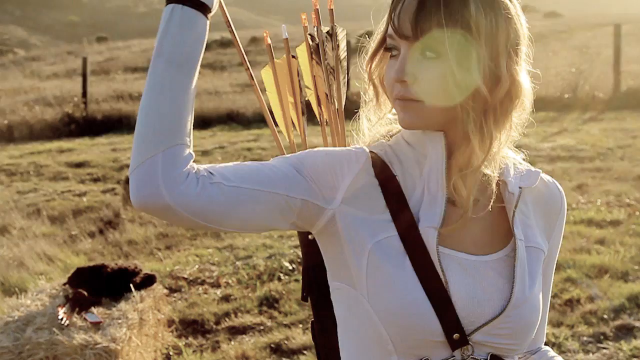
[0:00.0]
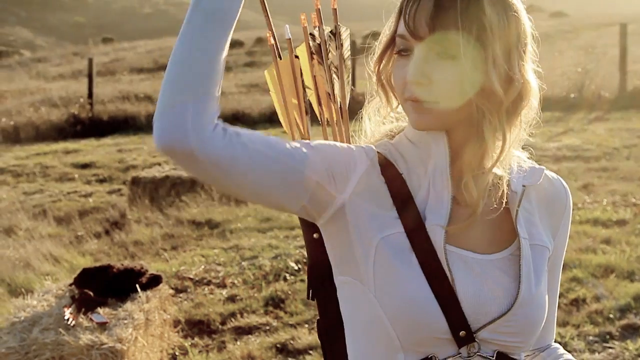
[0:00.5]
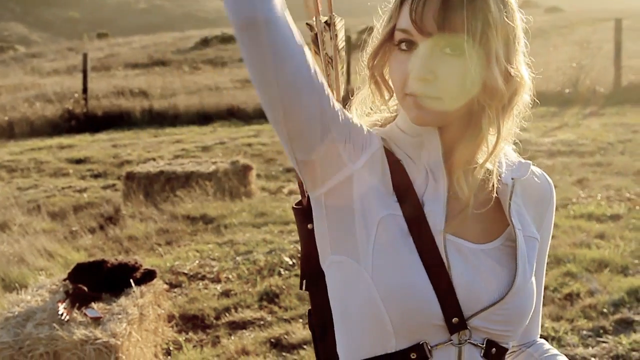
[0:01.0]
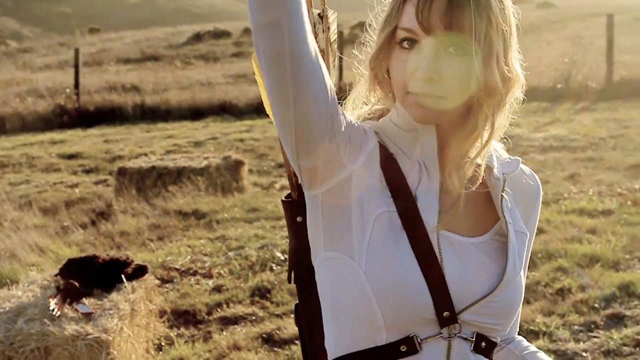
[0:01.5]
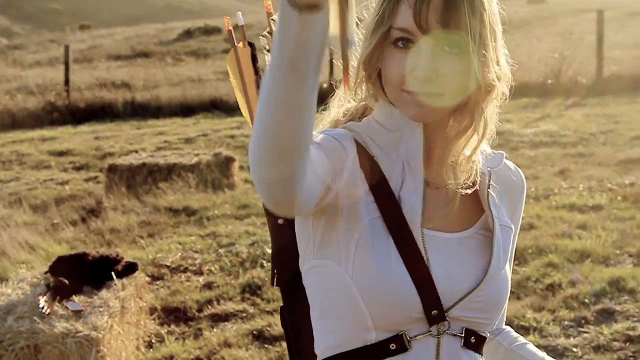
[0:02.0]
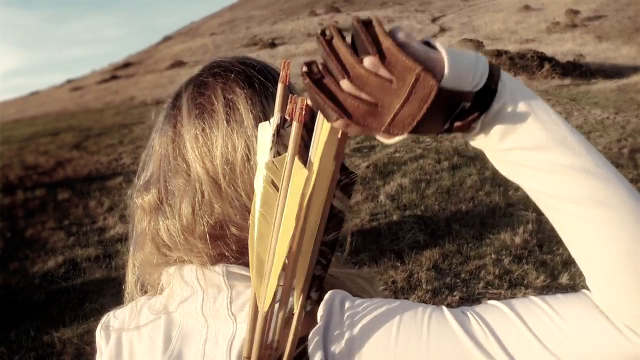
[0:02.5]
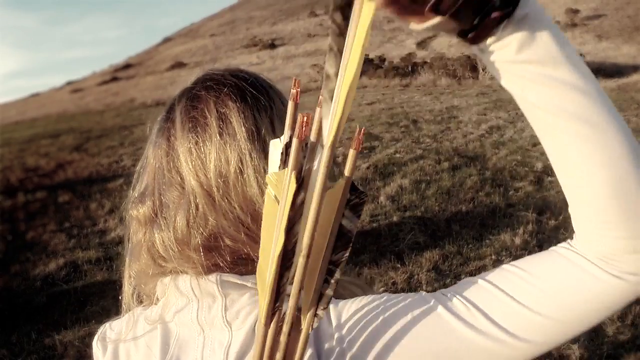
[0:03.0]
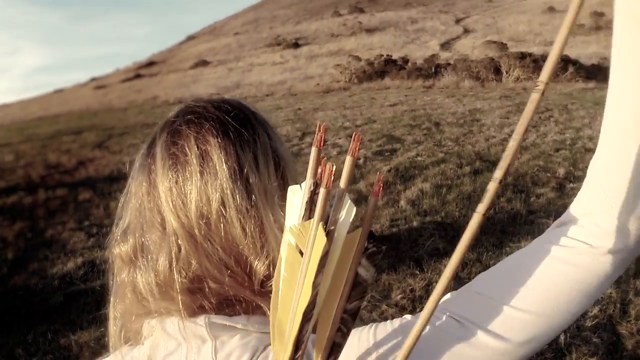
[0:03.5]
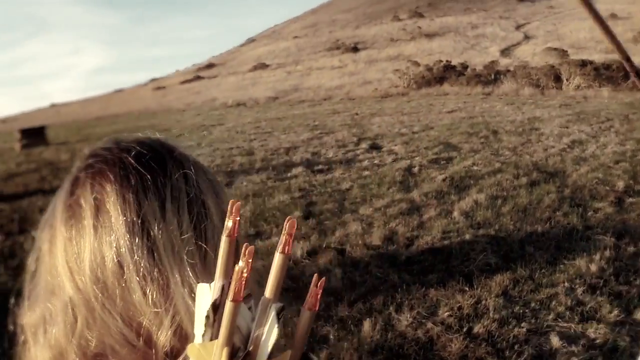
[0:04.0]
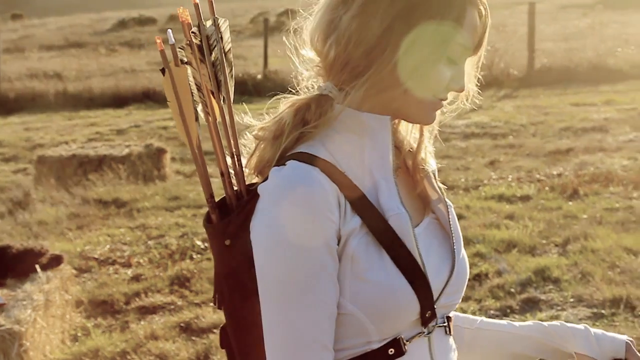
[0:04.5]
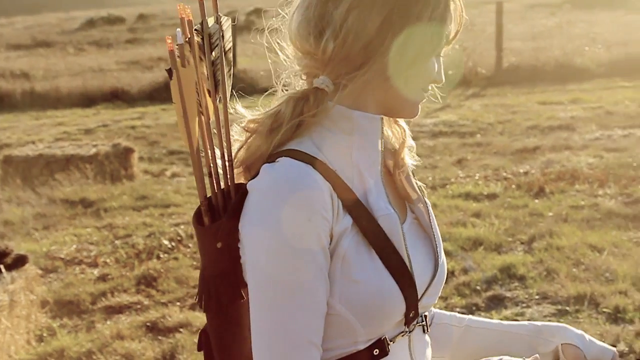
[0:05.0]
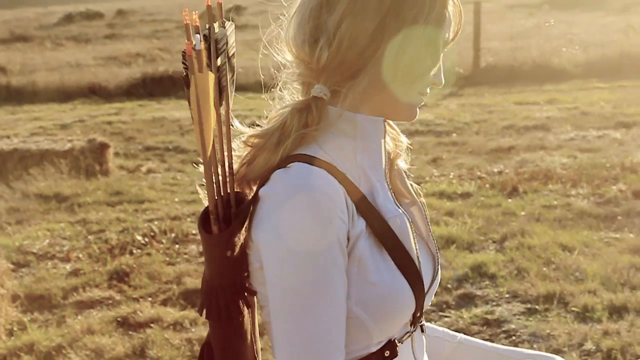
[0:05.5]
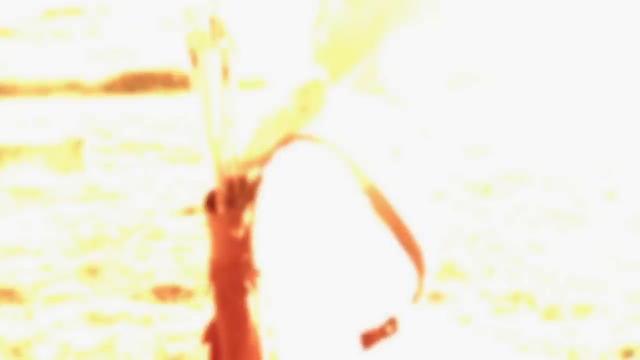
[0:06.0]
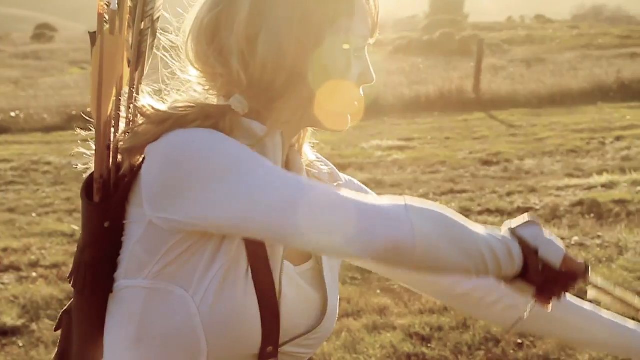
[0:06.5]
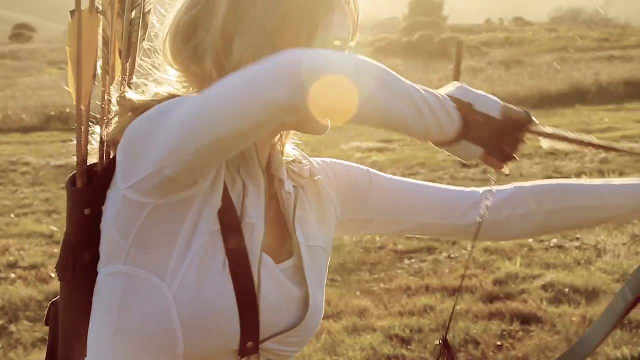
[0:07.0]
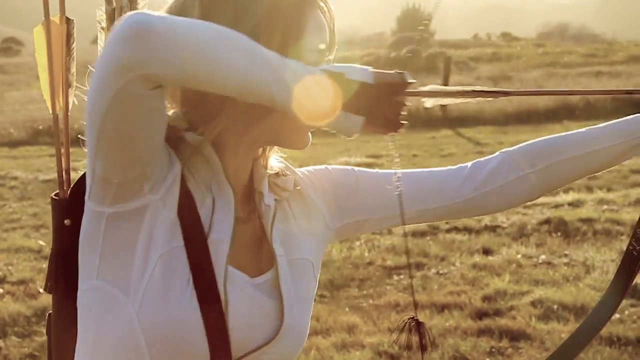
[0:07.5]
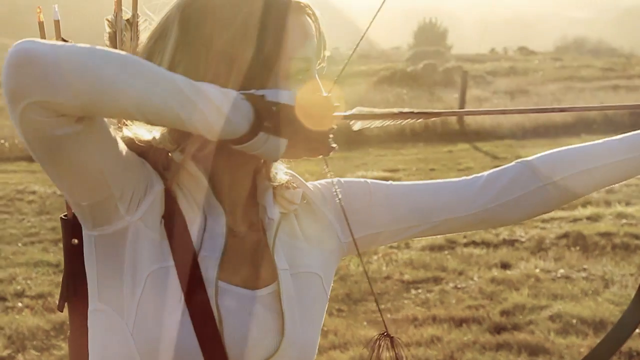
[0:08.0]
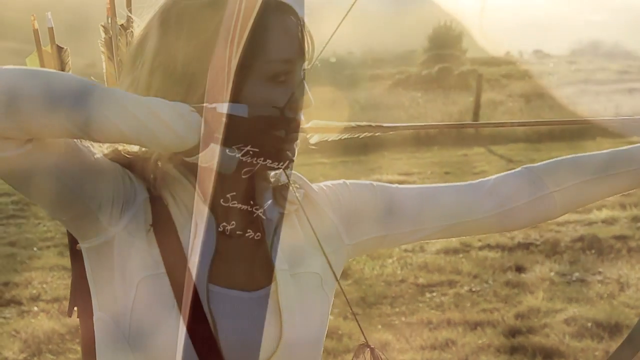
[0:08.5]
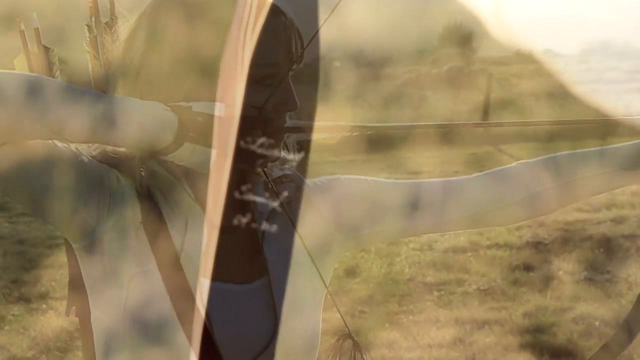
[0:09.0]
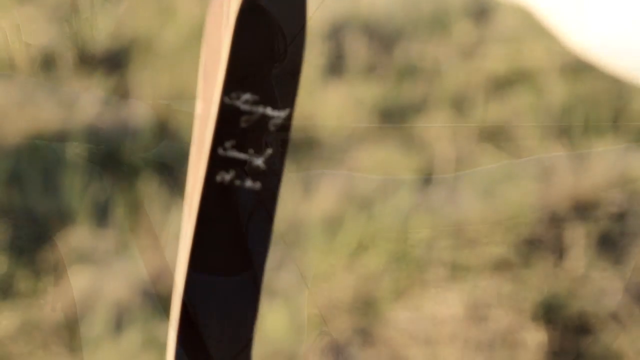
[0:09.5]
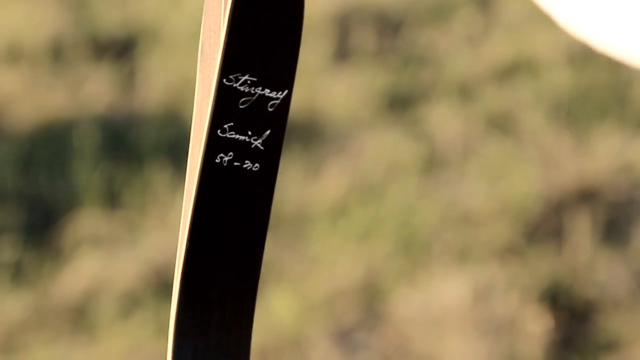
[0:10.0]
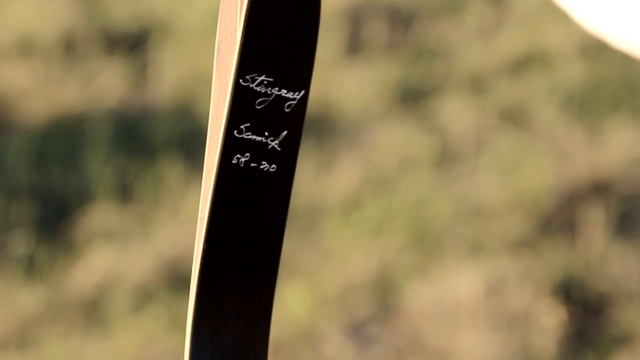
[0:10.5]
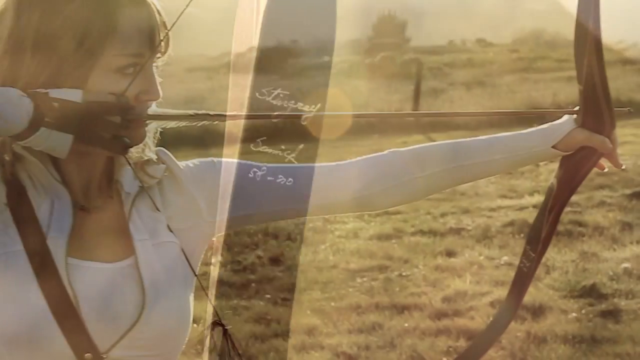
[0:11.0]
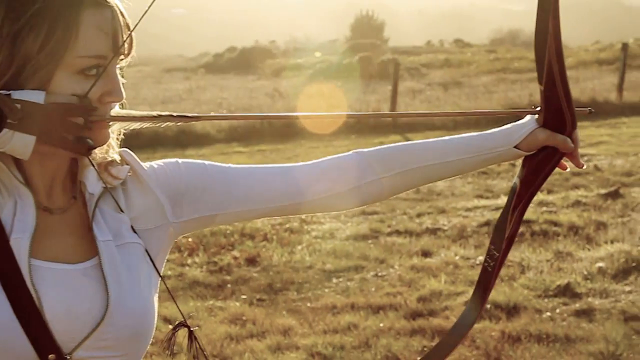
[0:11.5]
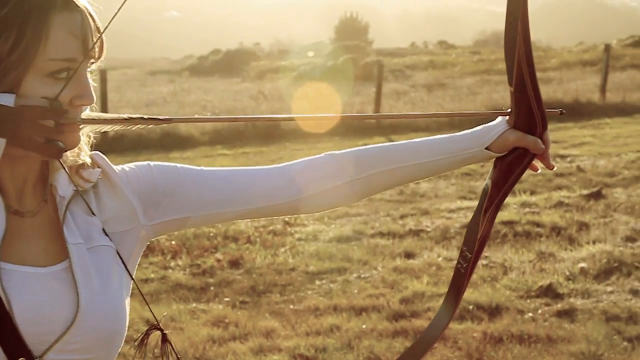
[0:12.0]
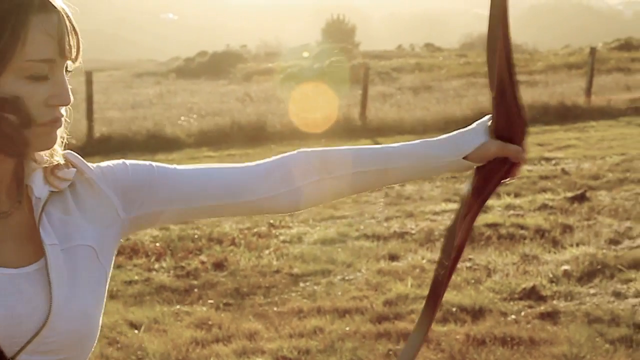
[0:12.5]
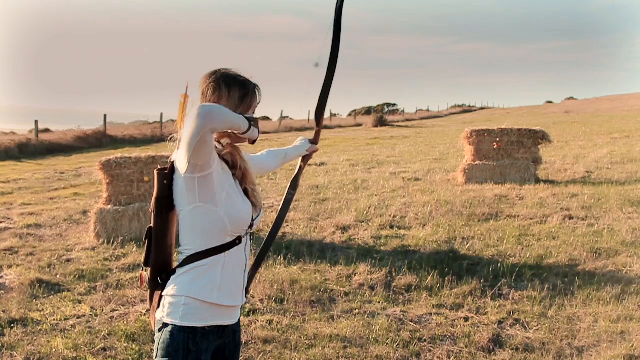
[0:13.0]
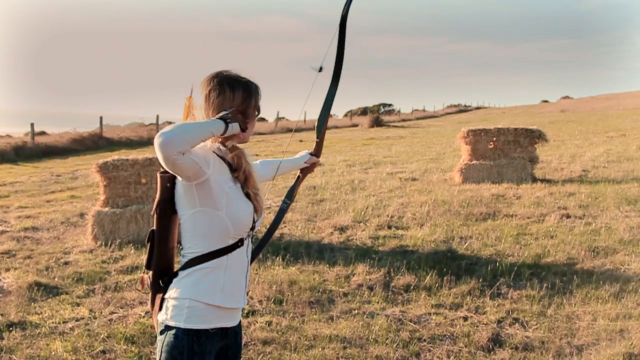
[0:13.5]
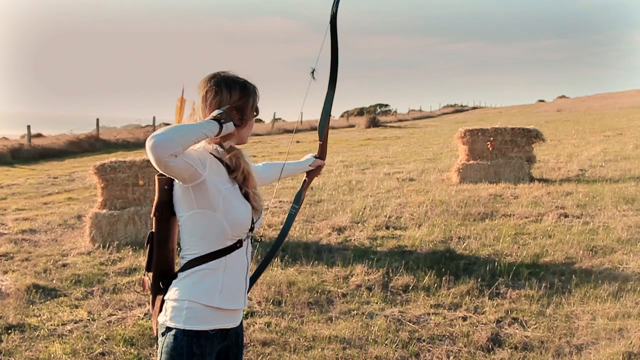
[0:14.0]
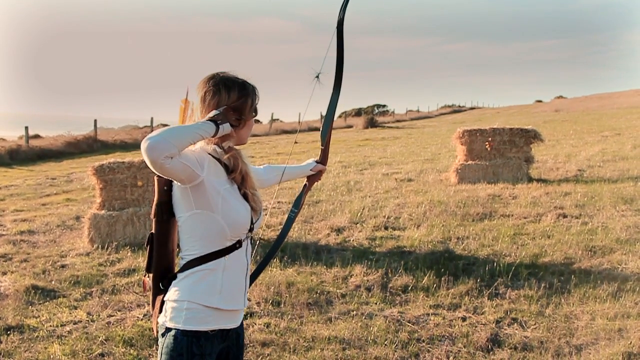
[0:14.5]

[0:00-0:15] A girl in a white outfit, dressed somewhat like the main character in Hunger Games, looks directly at the camera. She puts her hand behind her back to grab a bow and arrow; she wears brown gloves. She pulls out one of the arrows, and a side view shows her with all of the bows in a backpack around her shoulder. Her blonde hair is in pigtails, and she looks slightly down as she walks slowly. She puts her arm up, getting ready to fire the arrow. The image becomes somewhat opaque, and a close-up shows something that says "Stingray." Her arm is then held directly out with the arrow, and she fires it into the center of a bale of hay.